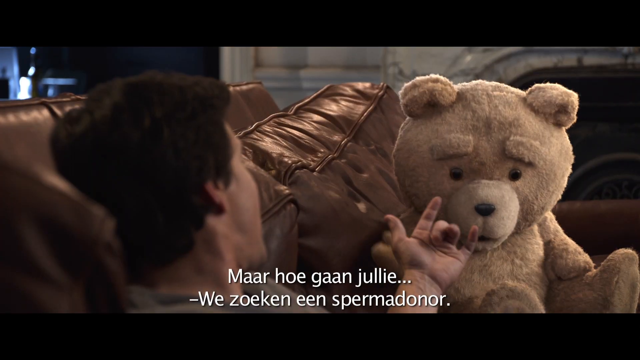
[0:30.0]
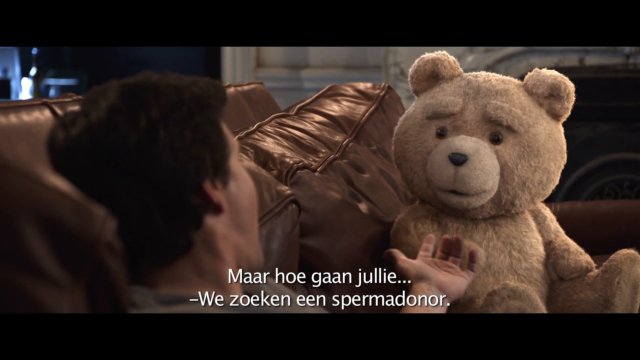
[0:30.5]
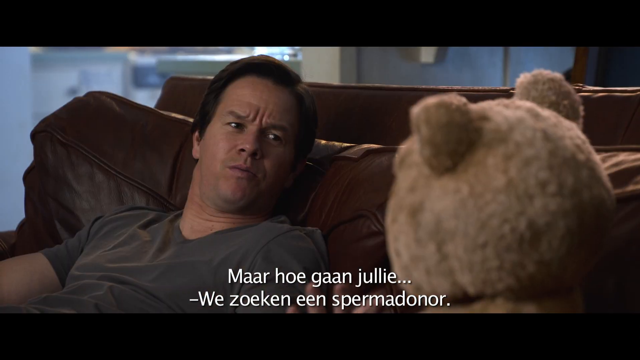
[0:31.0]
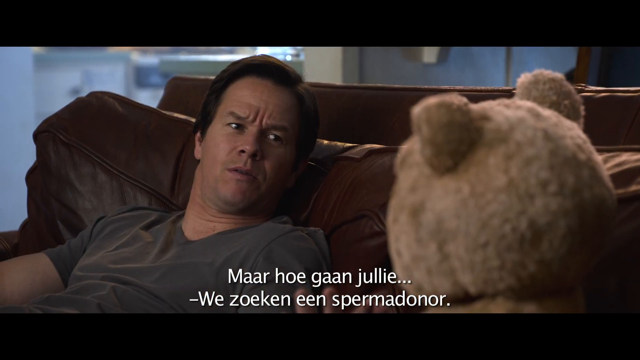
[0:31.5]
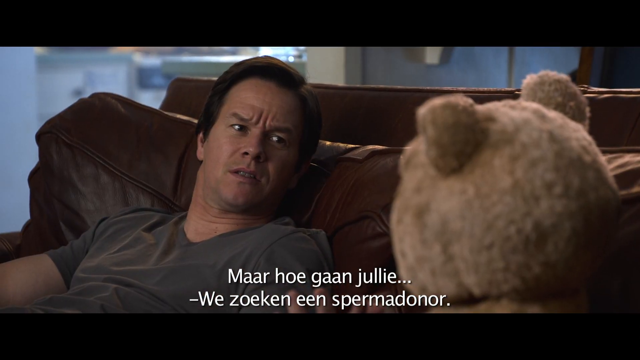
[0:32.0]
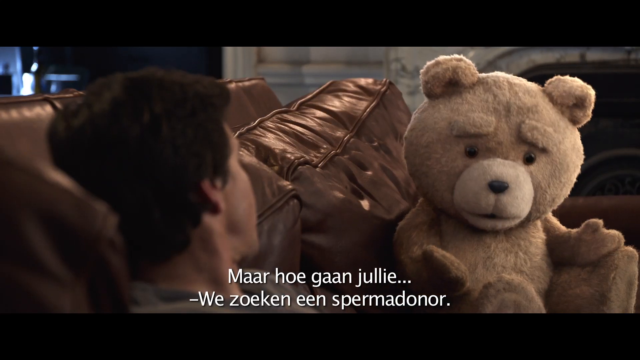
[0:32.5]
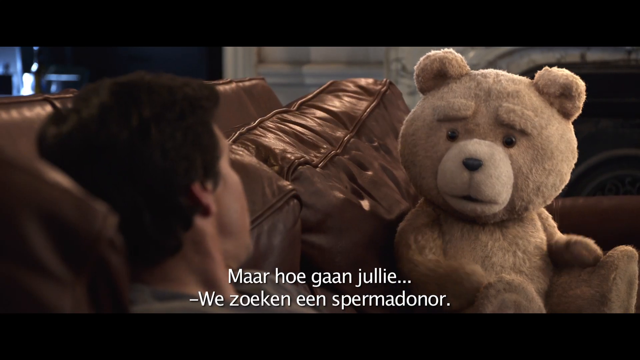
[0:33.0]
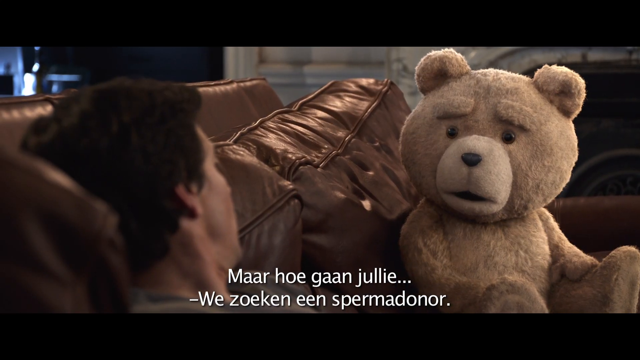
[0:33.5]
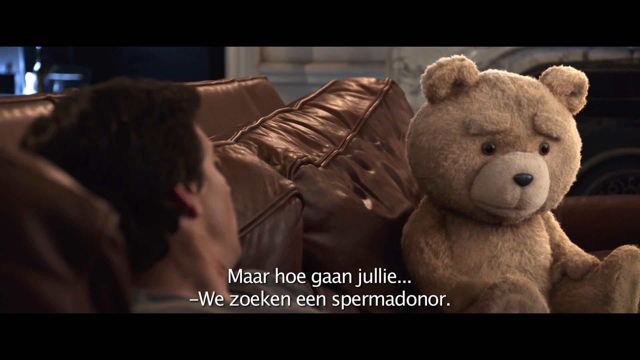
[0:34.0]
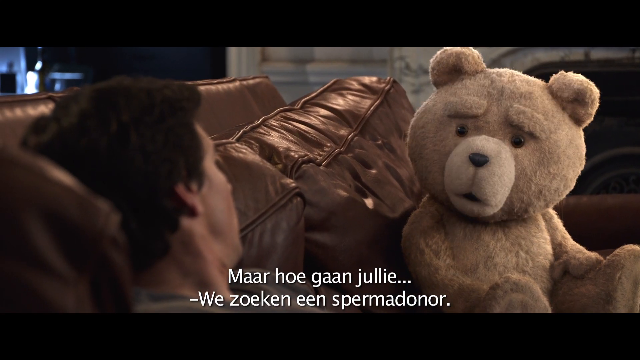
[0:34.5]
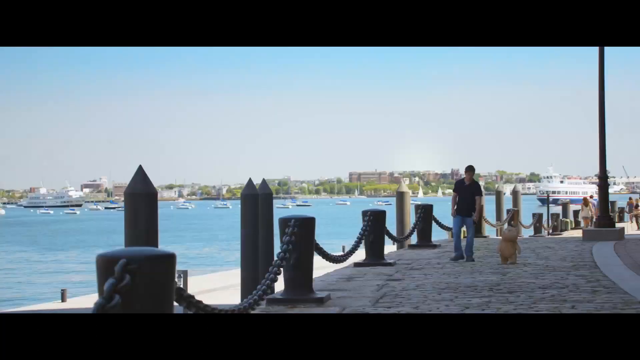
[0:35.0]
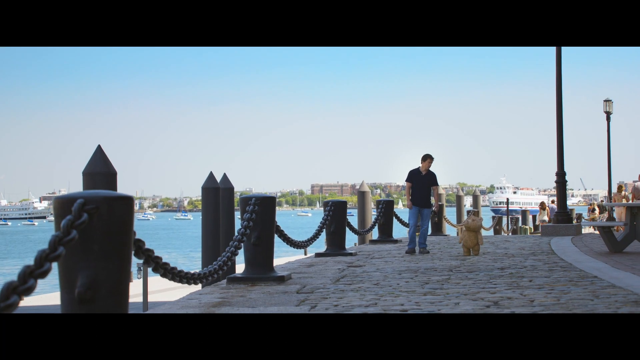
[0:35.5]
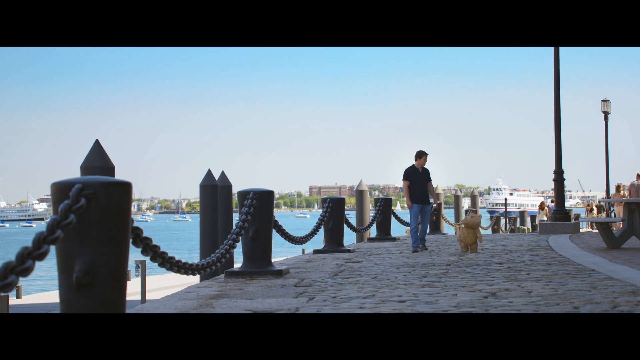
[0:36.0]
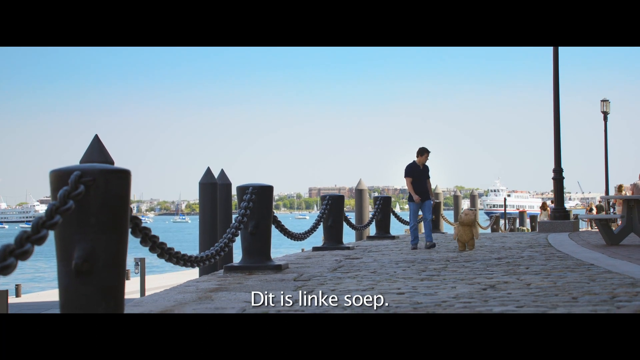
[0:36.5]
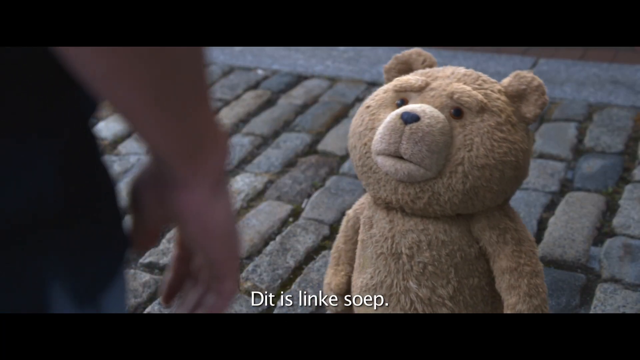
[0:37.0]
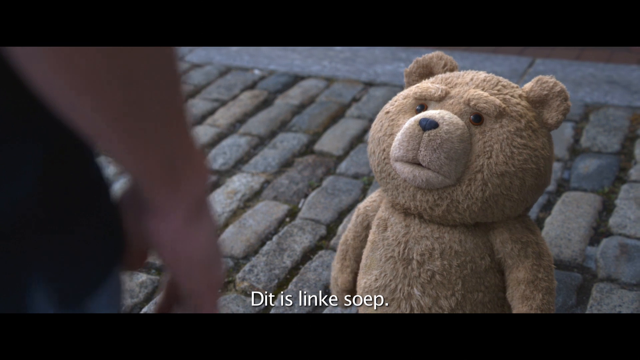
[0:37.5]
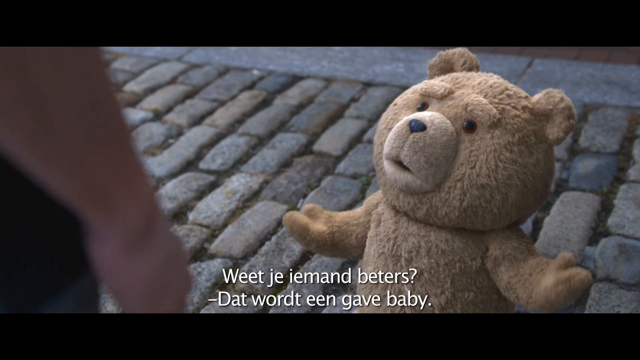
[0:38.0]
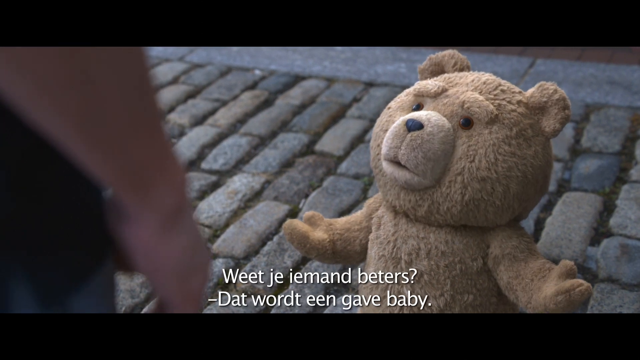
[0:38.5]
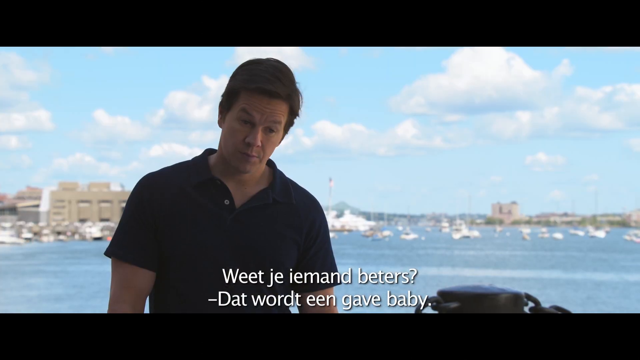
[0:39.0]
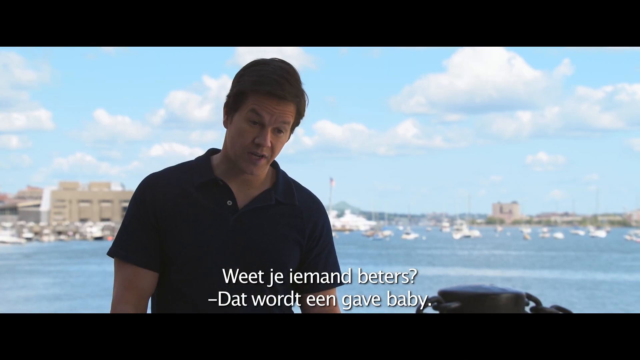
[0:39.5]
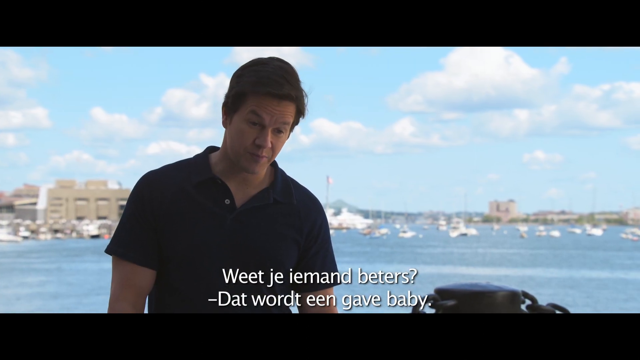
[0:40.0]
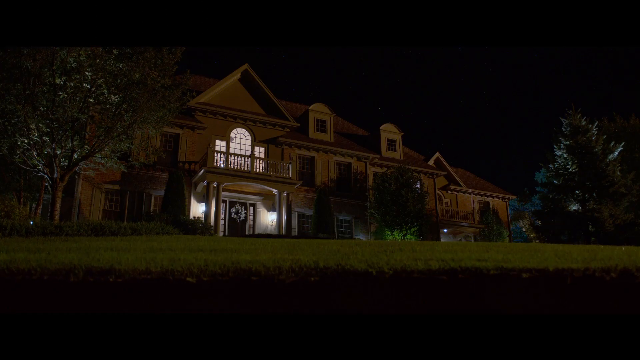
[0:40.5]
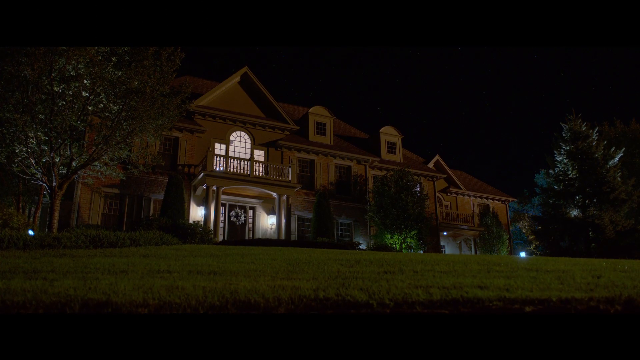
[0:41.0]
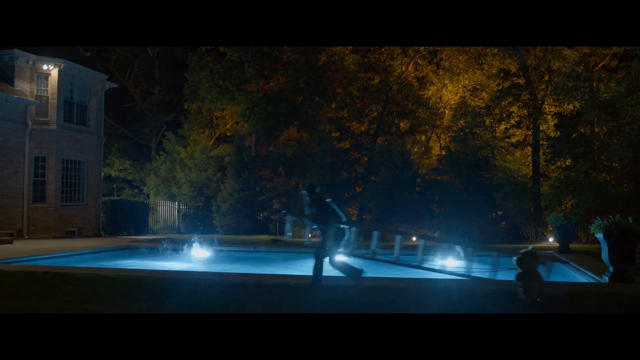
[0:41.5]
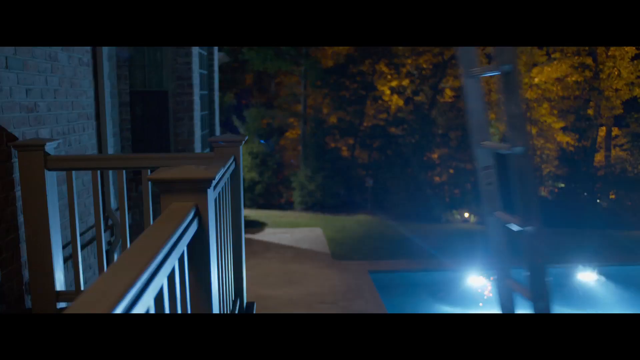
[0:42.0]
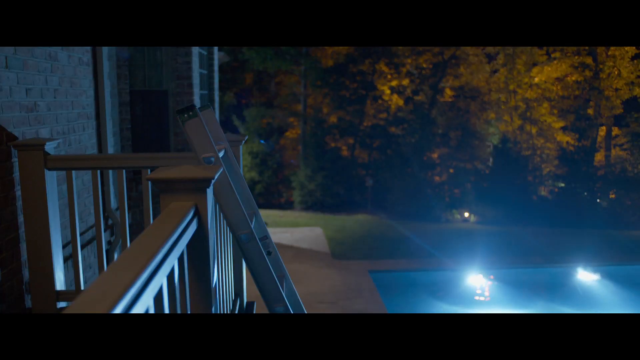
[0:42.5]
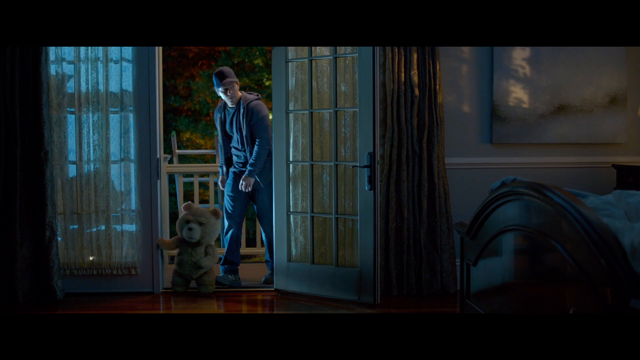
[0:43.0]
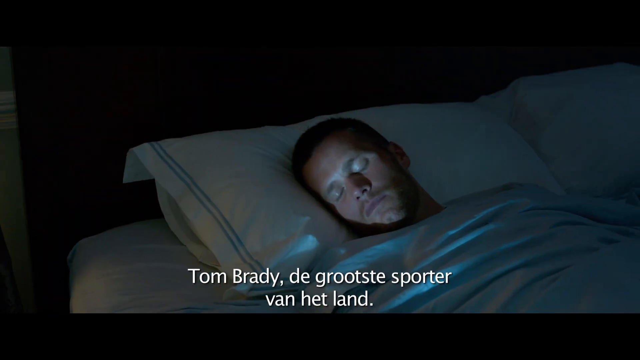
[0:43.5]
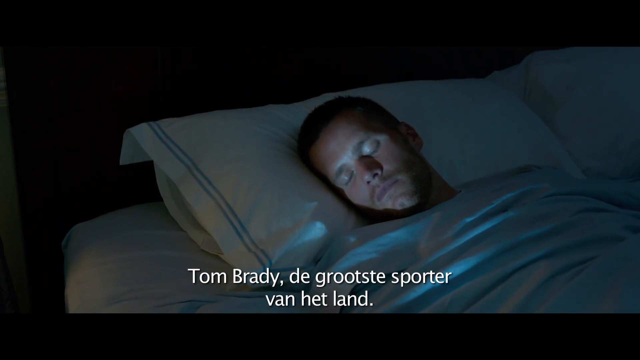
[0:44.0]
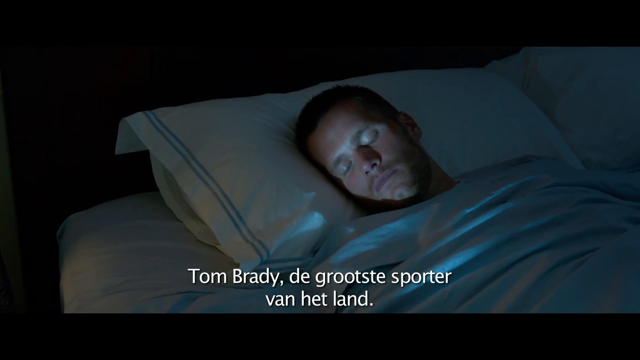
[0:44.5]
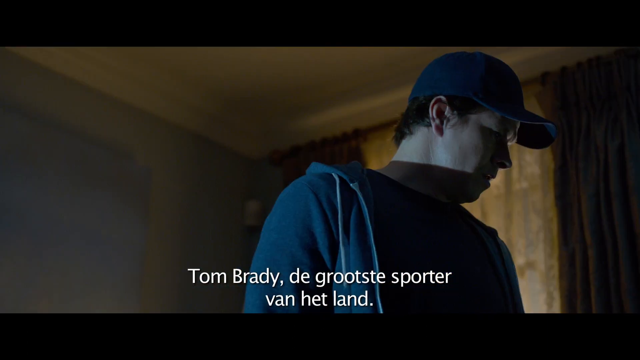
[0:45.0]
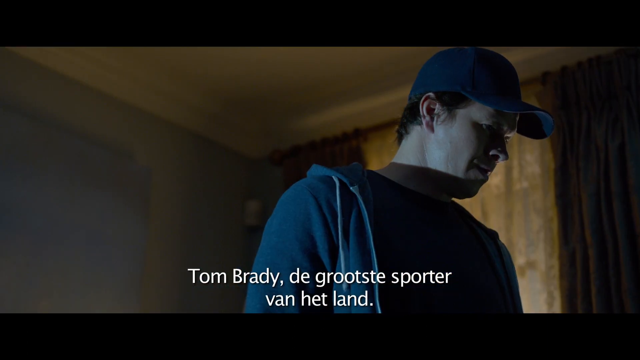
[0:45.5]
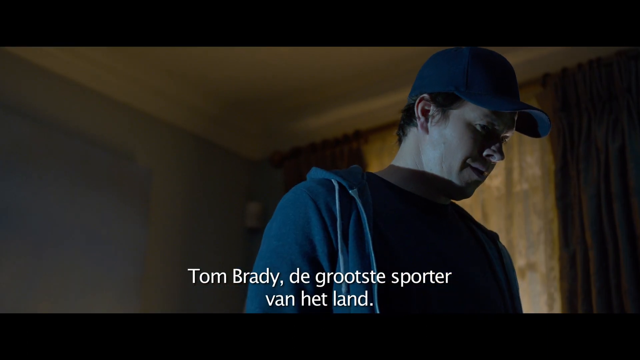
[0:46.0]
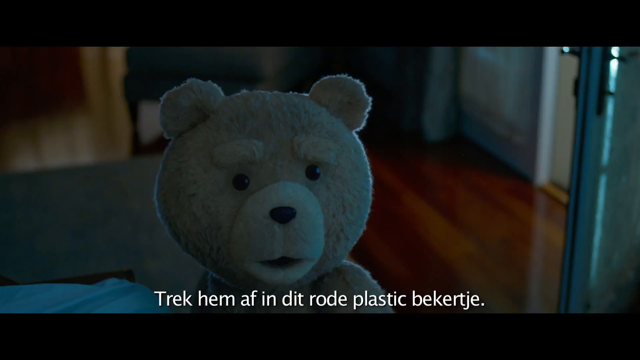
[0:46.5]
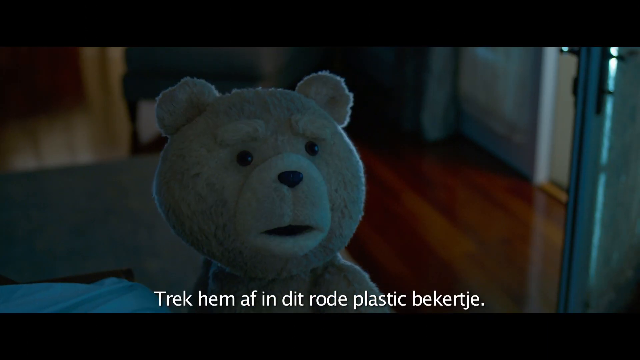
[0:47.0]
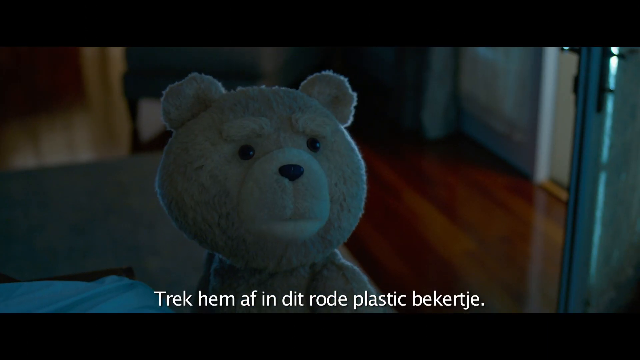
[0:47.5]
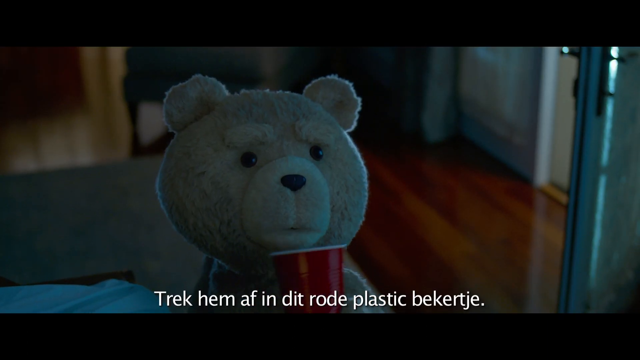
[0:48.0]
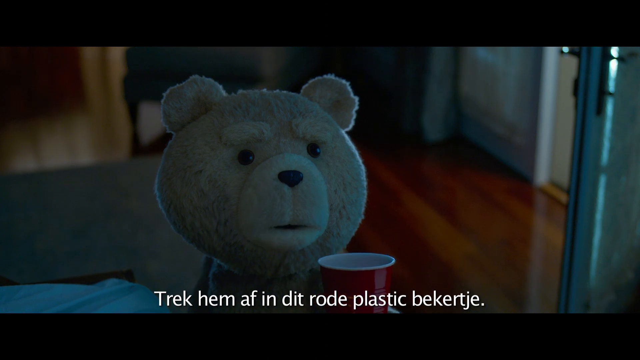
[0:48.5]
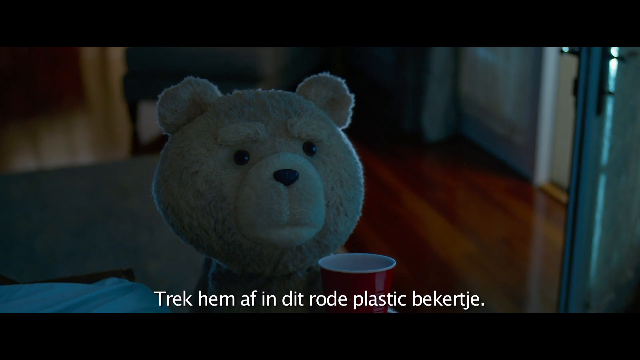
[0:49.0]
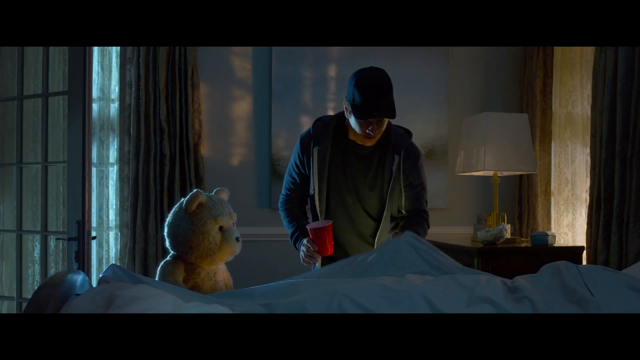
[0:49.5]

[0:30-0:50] Shots alternate between close-ups of the teddy bear and of Mark Wahlberg on the couch. Then a street view shows them talking to each other, apparently on a paved seaside walkway. In close-ups of each as they keep talking, the ocean with many little ships is in the background behind the actor. Next is the exterior of a very large home at night, with light coming from the entryway. Silhouettes of two figures, apparently Mark Wahlberg and the small teddy bear, crouch and sneak past an illuminated swimming pool. A ladder is propped against a second-floor balcony, and suddenly the two are on the balcony. They walk through French double doors, where someone who appears to be Tom Brady, the football player, is sleeping. They stand over him talking, then lift up his bed sheet. Mark Wahlberg holds a red Solo cup in his right hand and wears a black baseball hat.